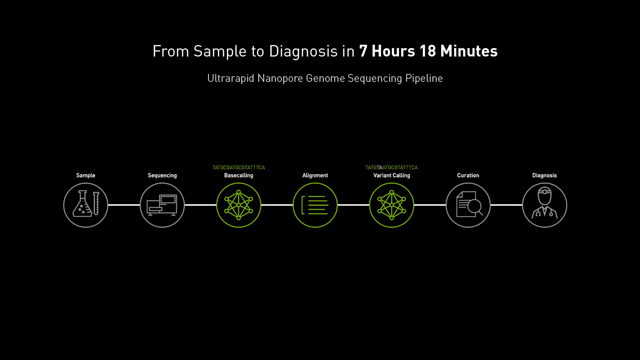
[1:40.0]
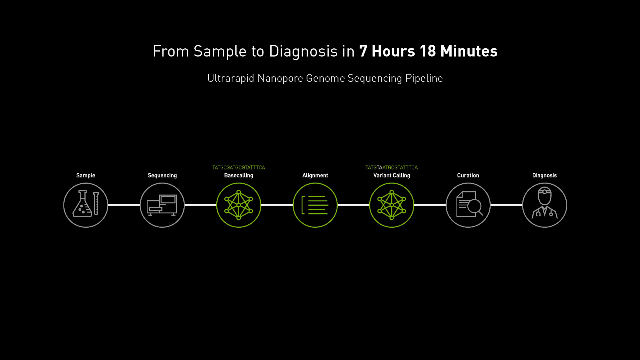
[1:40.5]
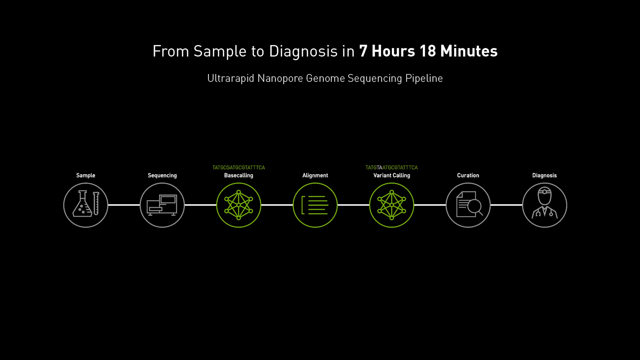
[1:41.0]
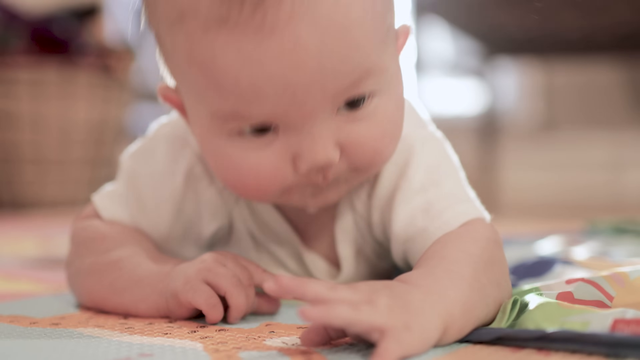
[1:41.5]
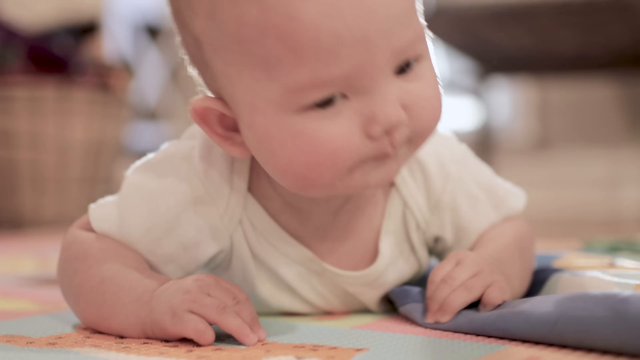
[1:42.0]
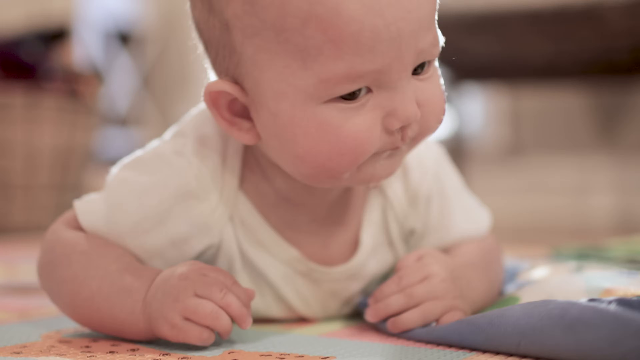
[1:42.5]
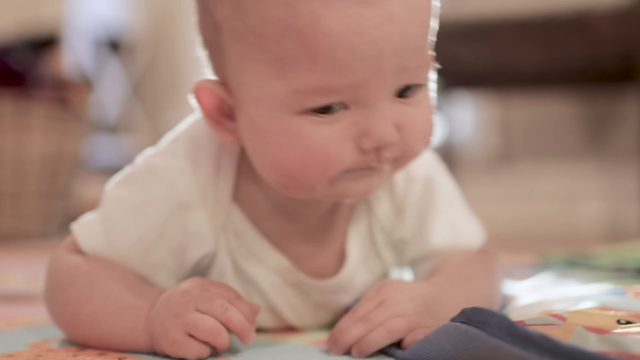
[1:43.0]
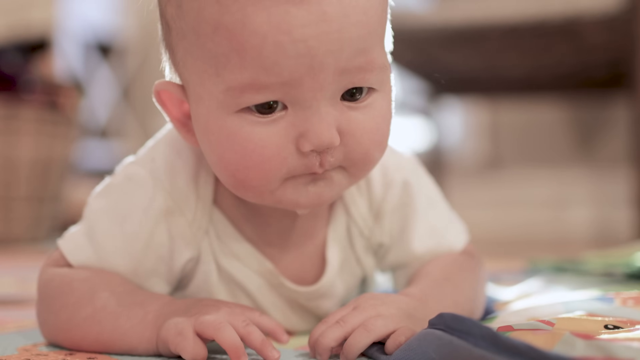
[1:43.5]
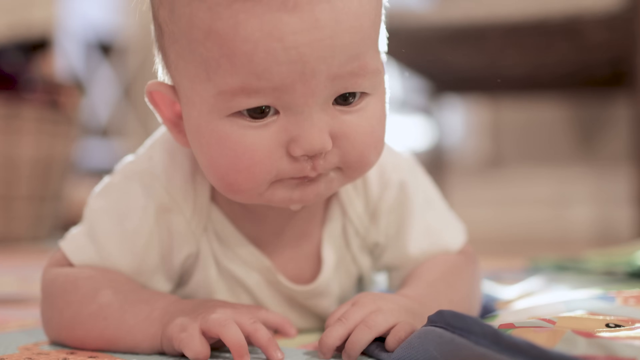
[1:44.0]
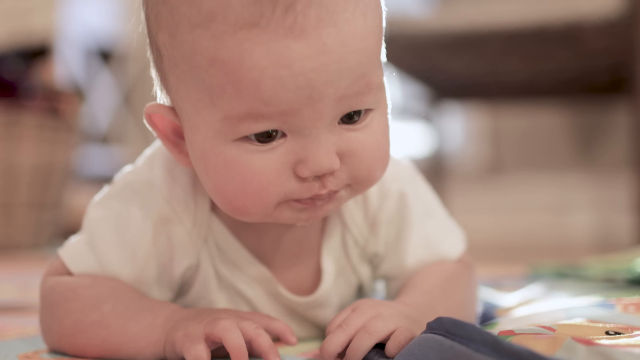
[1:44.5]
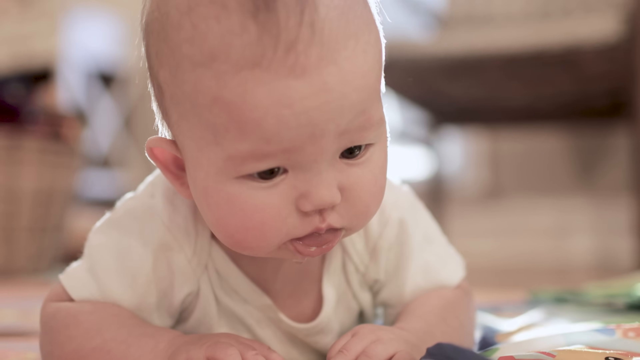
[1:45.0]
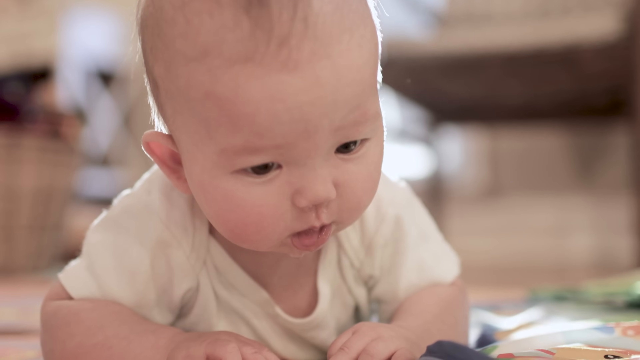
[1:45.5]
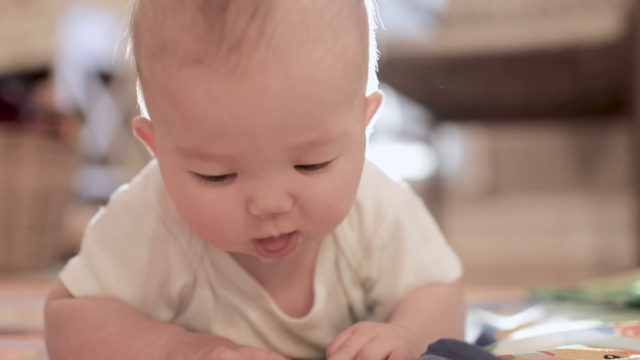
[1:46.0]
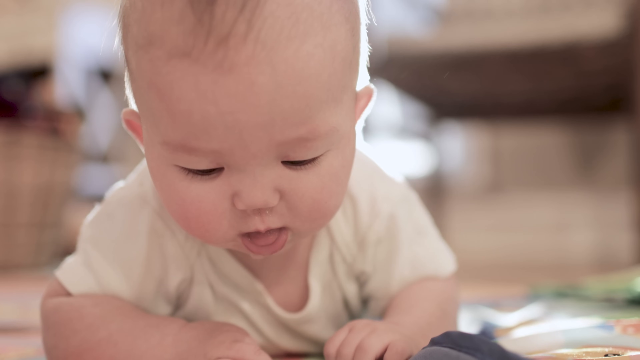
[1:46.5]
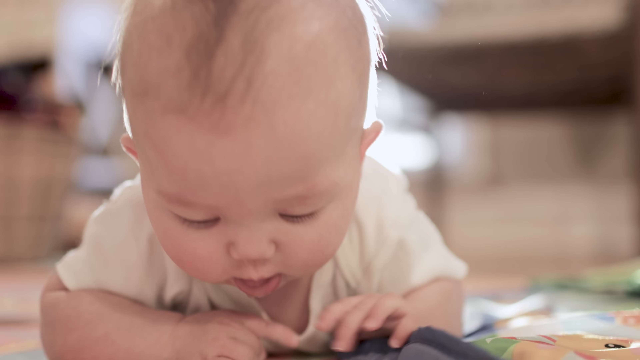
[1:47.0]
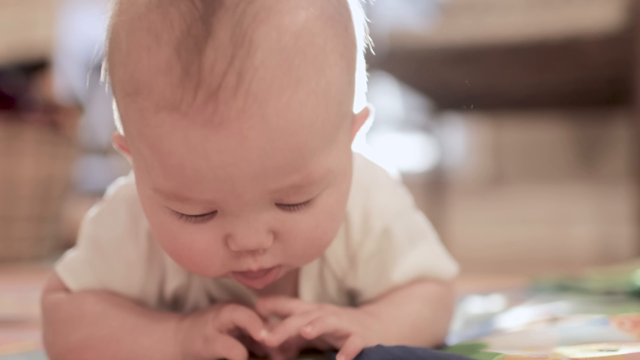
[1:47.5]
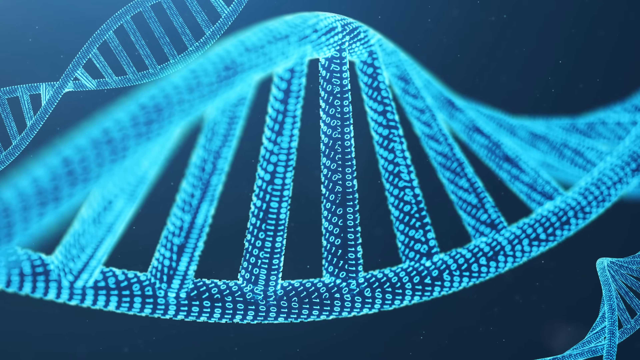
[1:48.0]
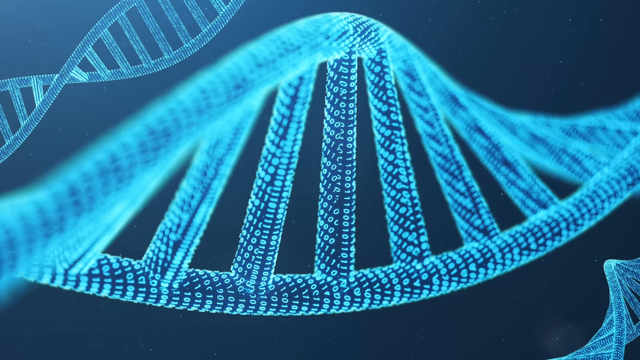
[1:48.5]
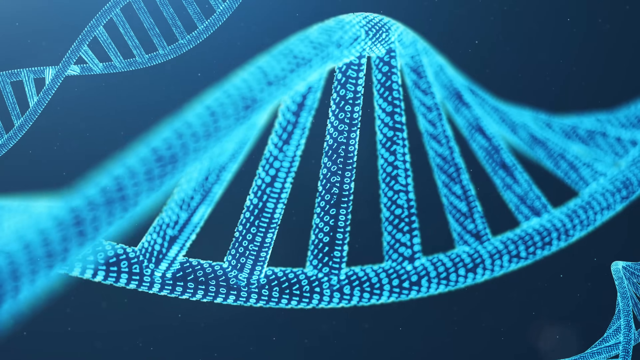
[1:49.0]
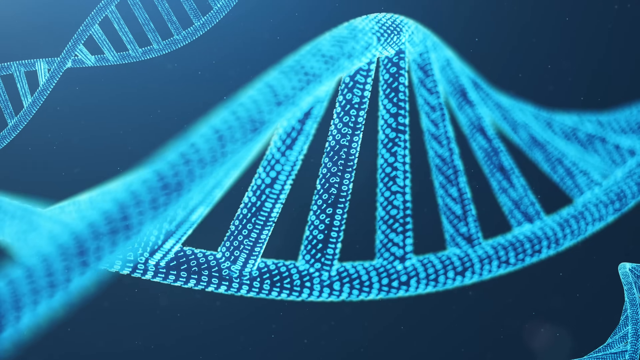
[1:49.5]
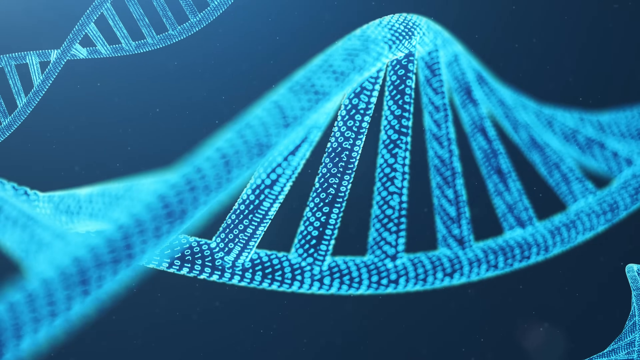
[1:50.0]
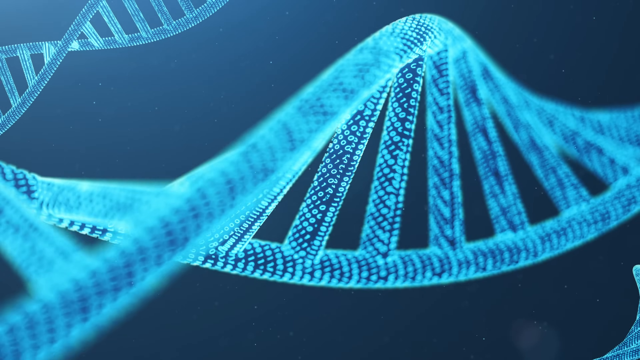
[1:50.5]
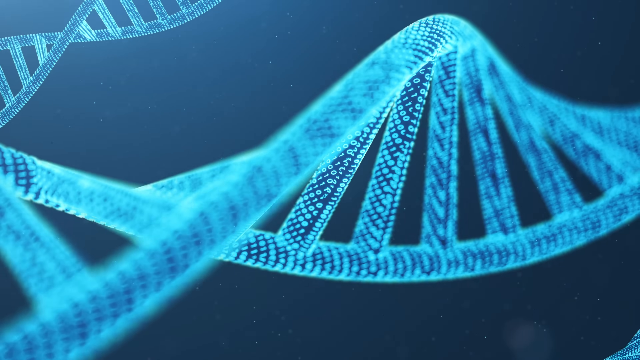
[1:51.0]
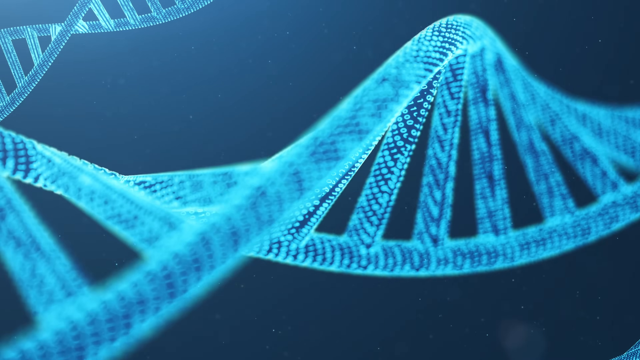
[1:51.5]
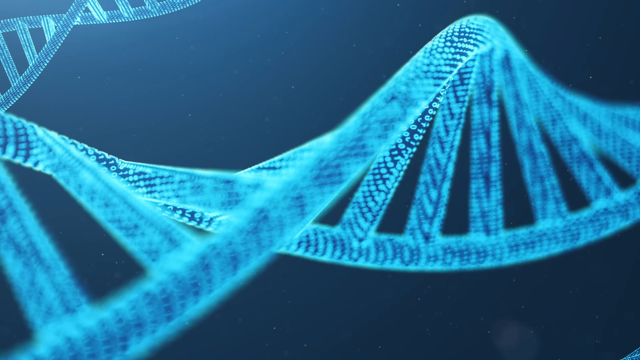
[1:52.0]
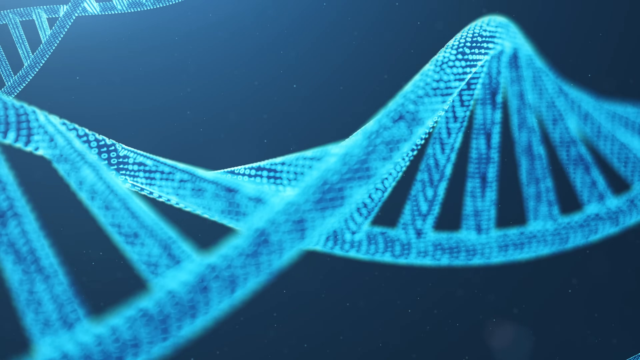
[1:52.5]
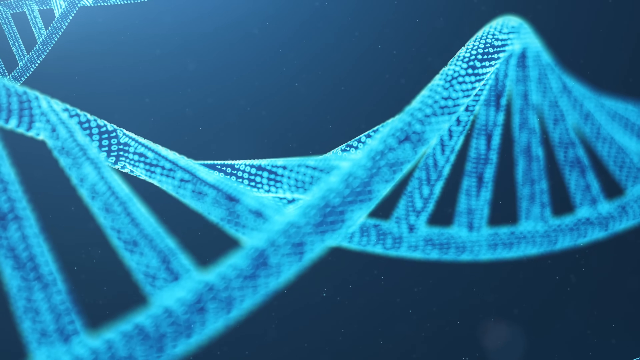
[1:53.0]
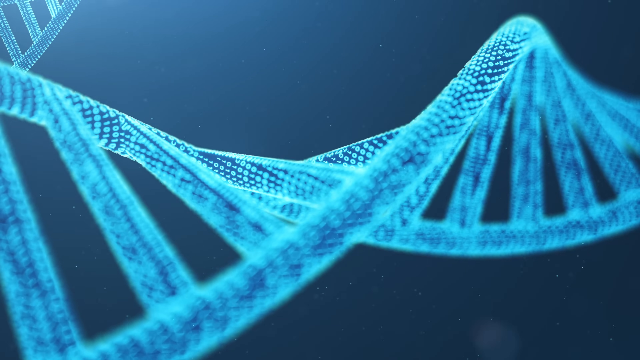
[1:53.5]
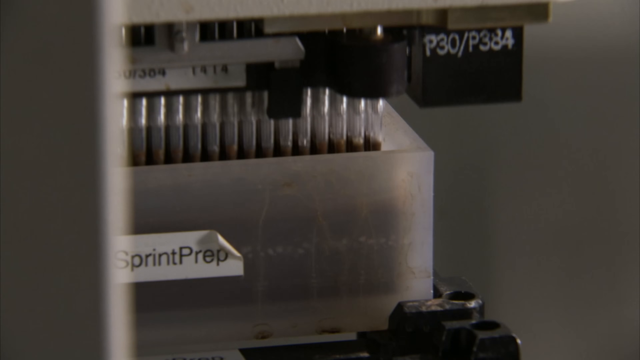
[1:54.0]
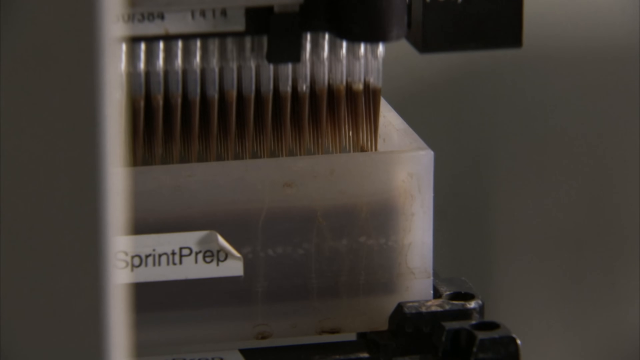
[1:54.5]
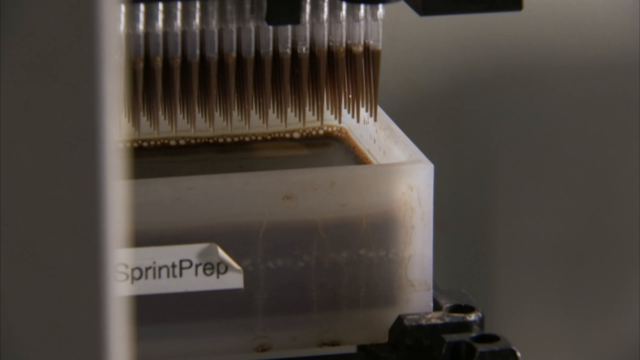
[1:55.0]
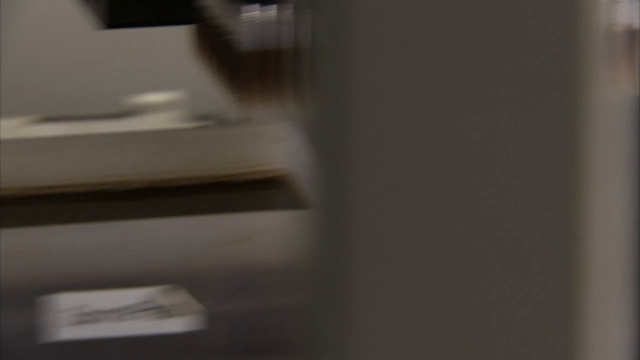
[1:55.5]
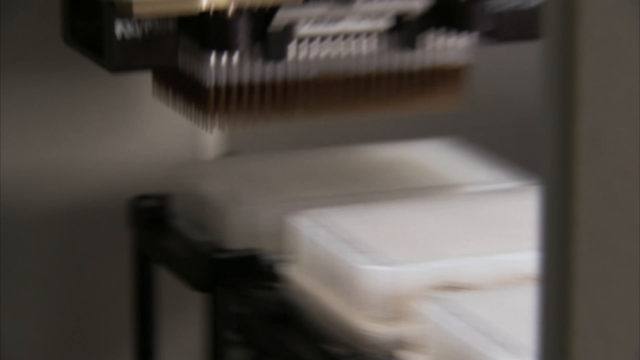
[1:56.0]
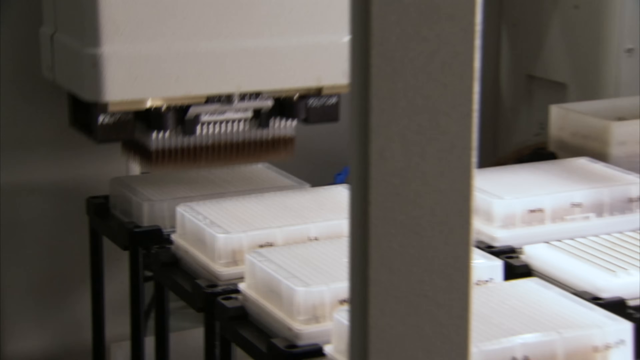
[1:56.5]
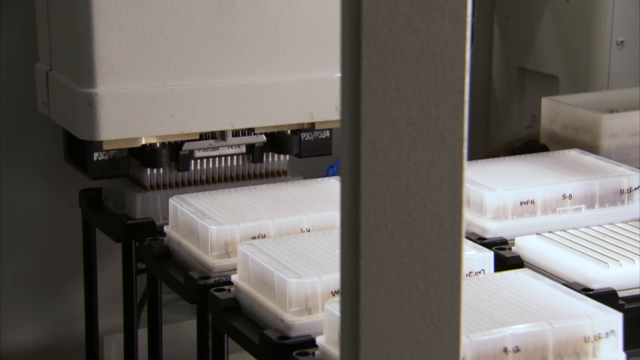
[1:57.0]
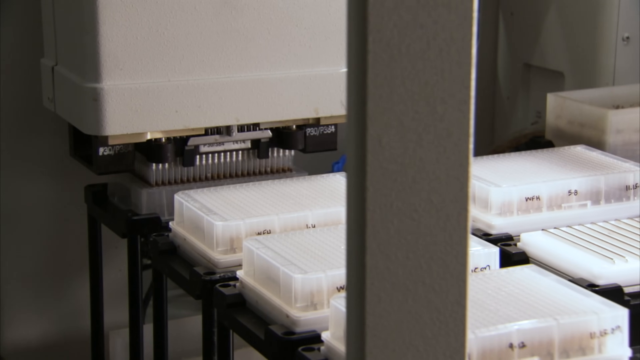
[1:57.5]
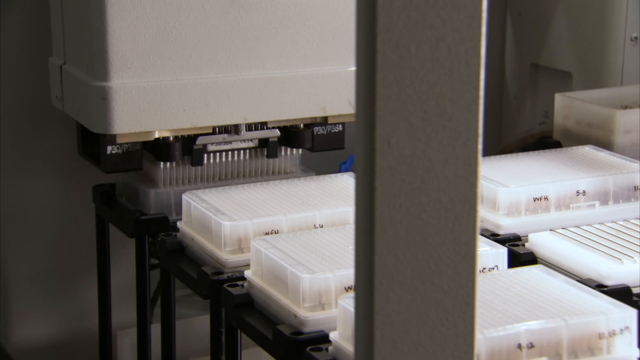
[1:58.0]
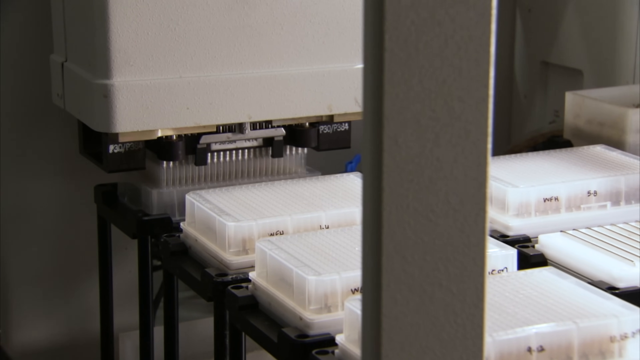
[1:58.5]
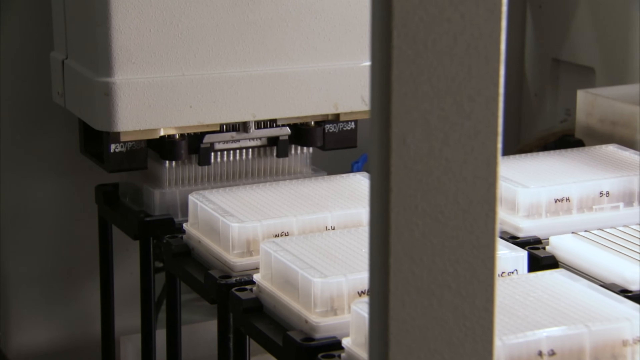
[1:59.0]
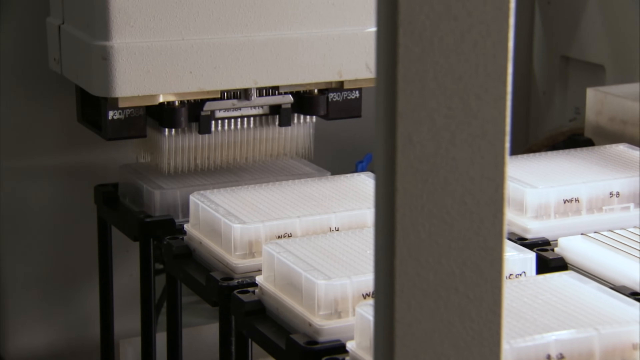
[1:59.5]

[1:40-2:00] The screen reads "from sample to diagnosis in seven hours, 18 minutes" and "ultra-rapid nanocore genome sequencing pipeline," followed by "sample," "sequencing," "base calling," "alignment," "variant calling," "curation" and "diagnosis," with a little picture for each. Then a baby on its stomach pushes itself up: a little baby boy who appears white but might be Asian, wearing a white shirt, with brown eyes, balding with sandy brown hair; he moves his mouth, kind of gurgling. A blue DNA structure with binary zeros and ones written inside spins clockwise. Then a number of test tubes appear with the text "sprint prep," and a brown liquid is piped into what looks to be probably about 100 test tubes. Then five other white boxes are shown.